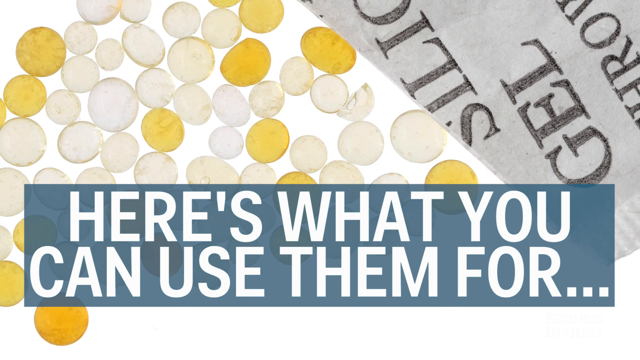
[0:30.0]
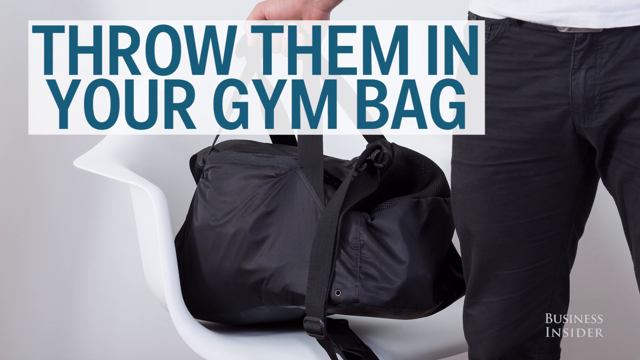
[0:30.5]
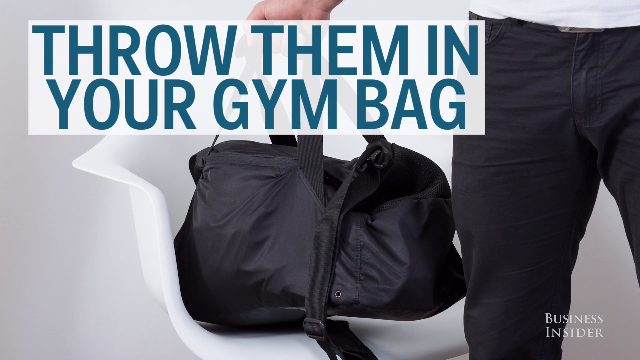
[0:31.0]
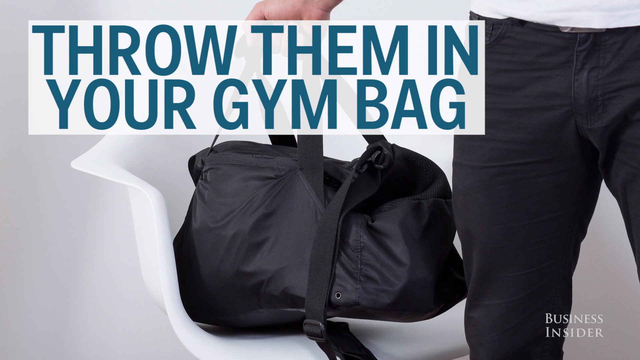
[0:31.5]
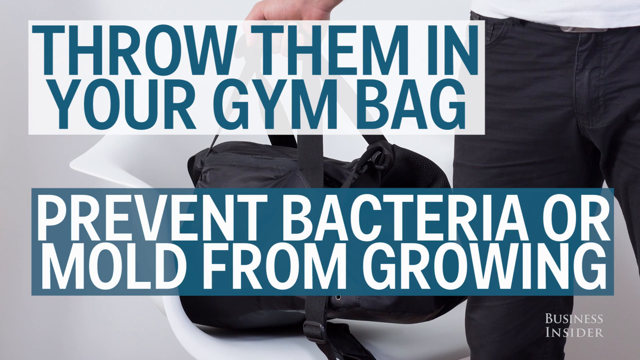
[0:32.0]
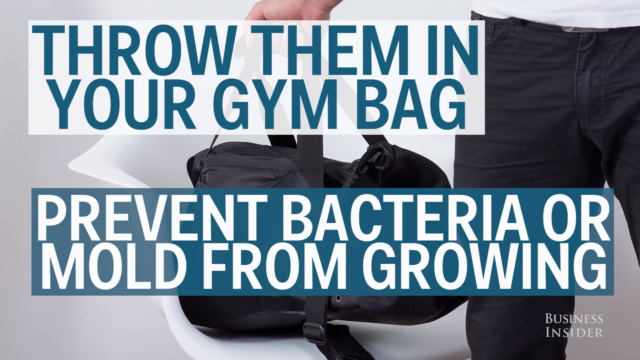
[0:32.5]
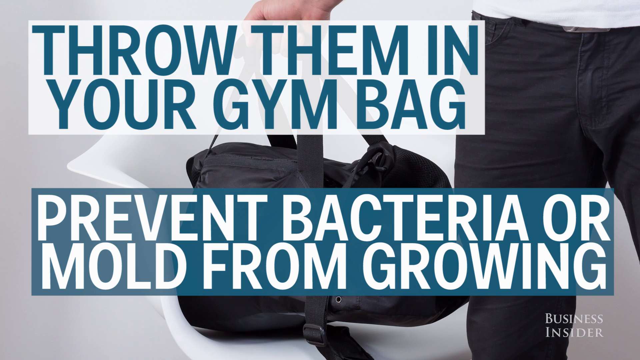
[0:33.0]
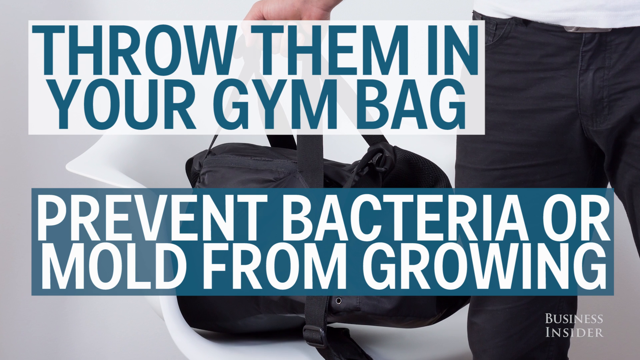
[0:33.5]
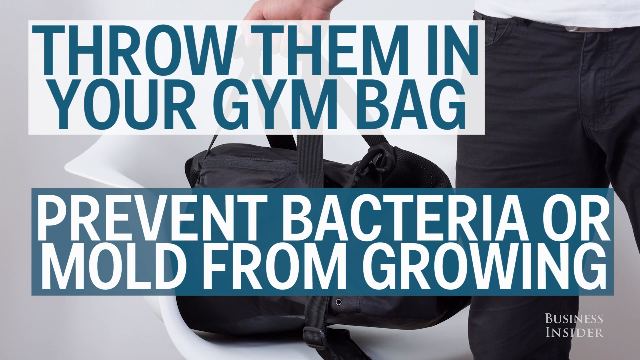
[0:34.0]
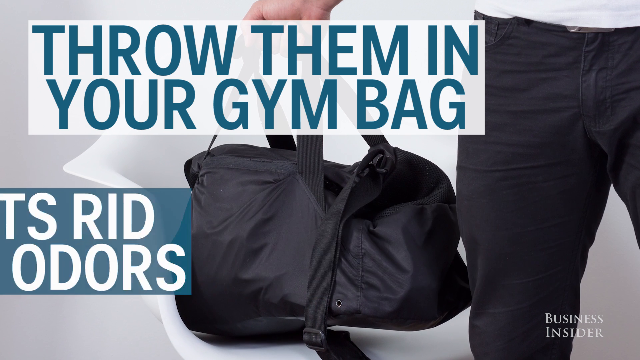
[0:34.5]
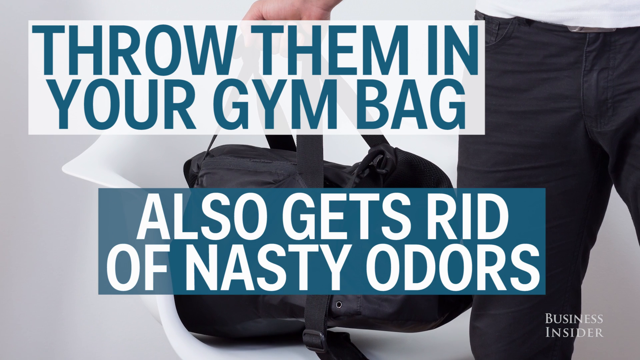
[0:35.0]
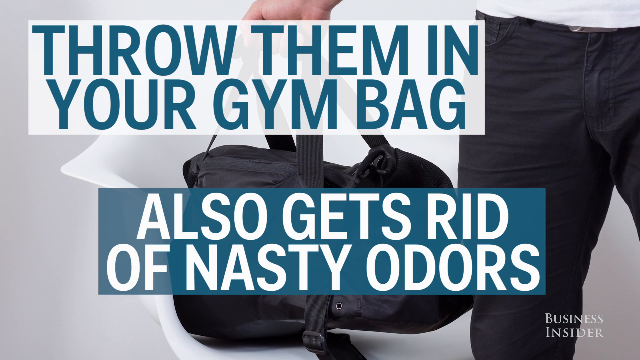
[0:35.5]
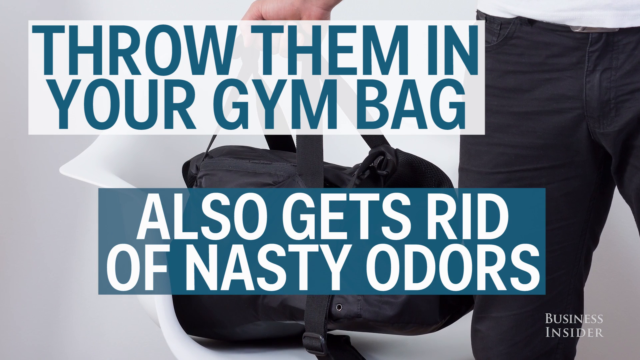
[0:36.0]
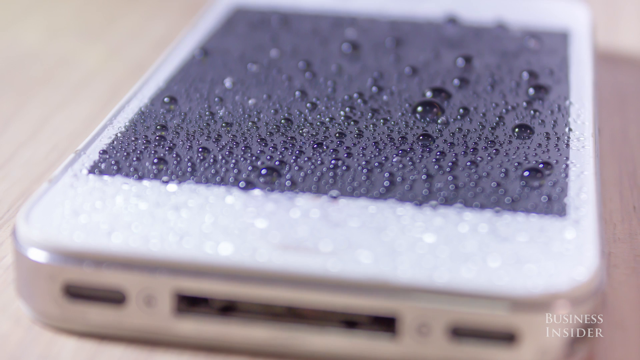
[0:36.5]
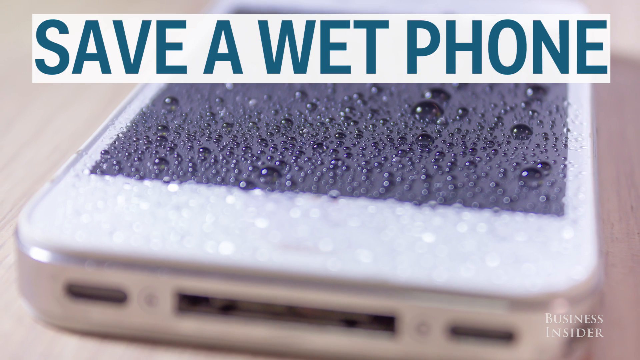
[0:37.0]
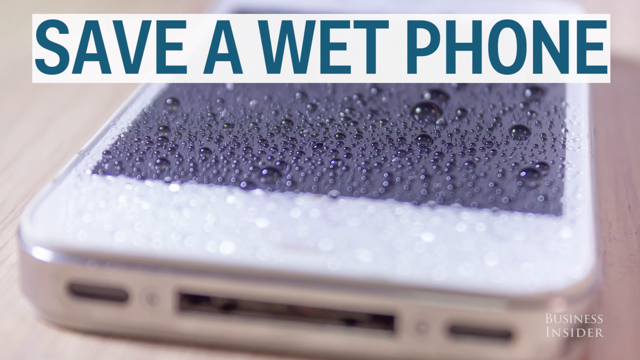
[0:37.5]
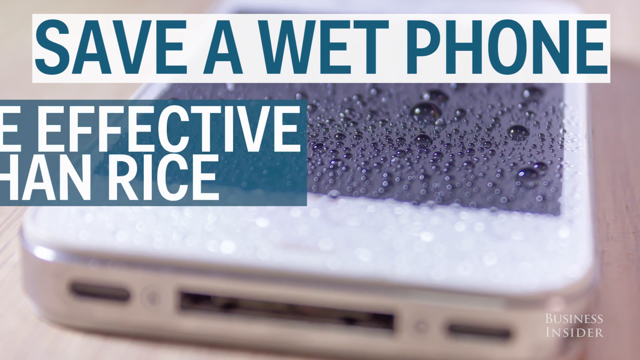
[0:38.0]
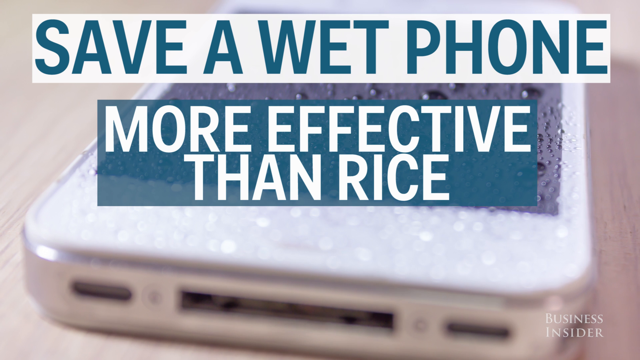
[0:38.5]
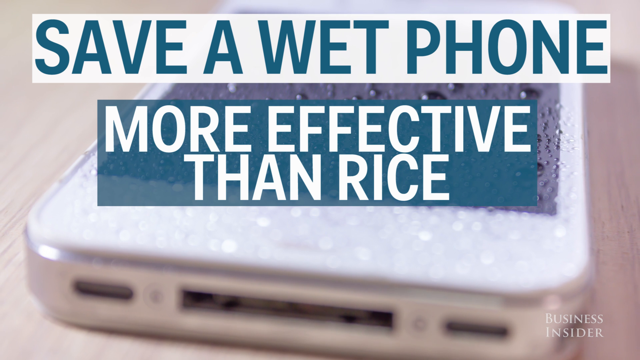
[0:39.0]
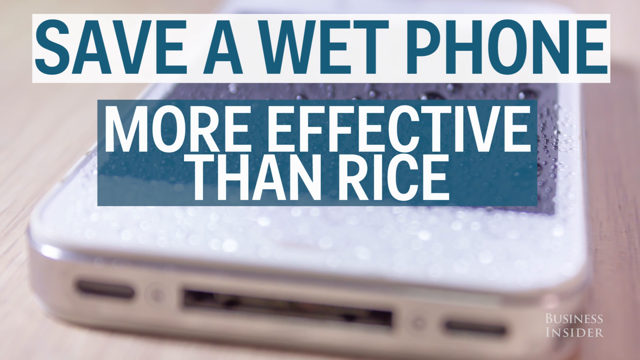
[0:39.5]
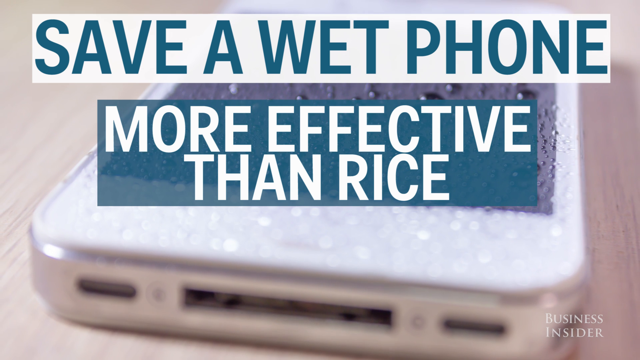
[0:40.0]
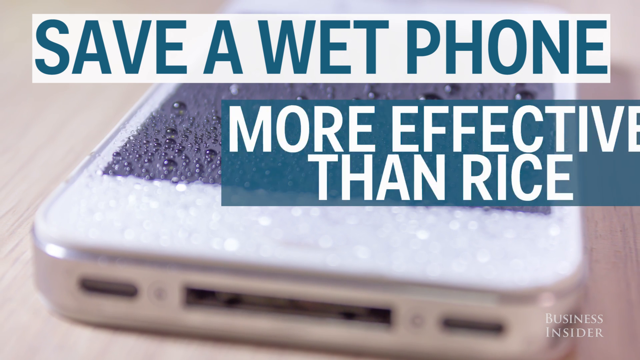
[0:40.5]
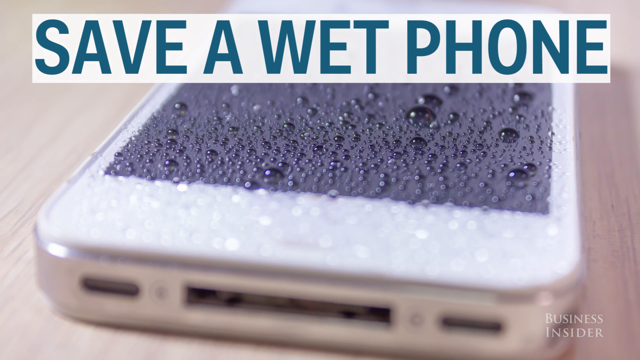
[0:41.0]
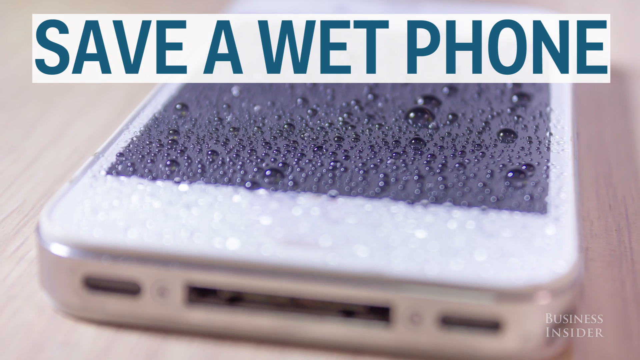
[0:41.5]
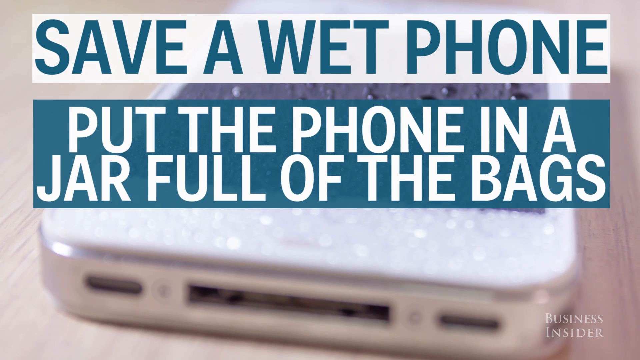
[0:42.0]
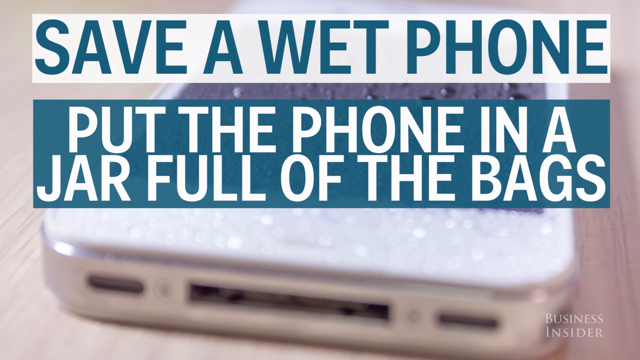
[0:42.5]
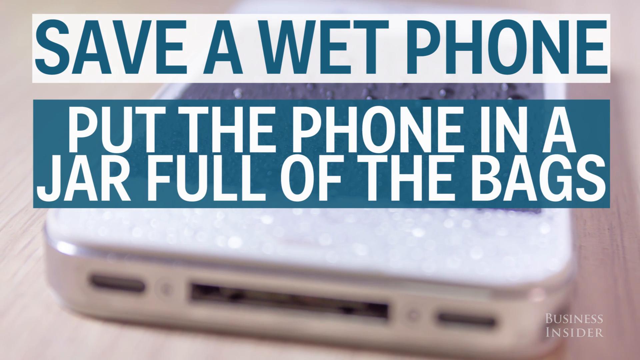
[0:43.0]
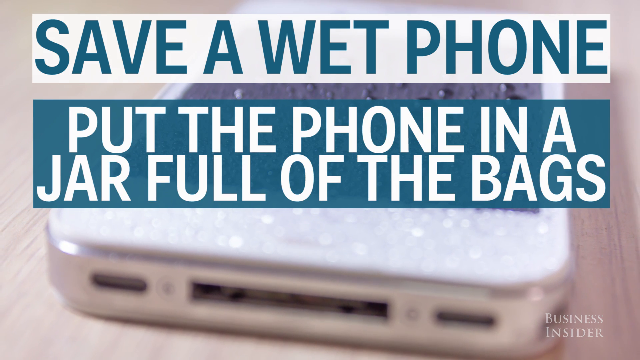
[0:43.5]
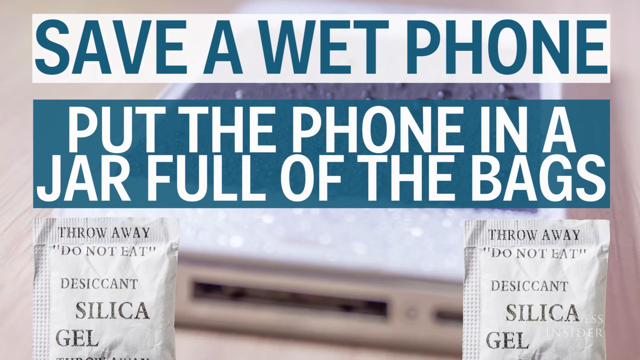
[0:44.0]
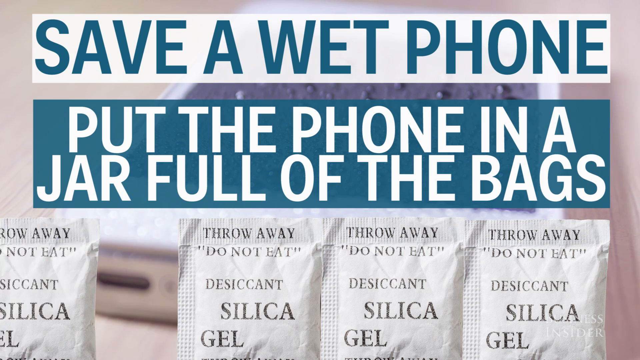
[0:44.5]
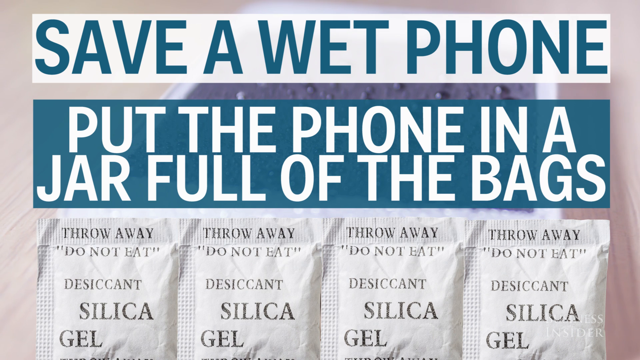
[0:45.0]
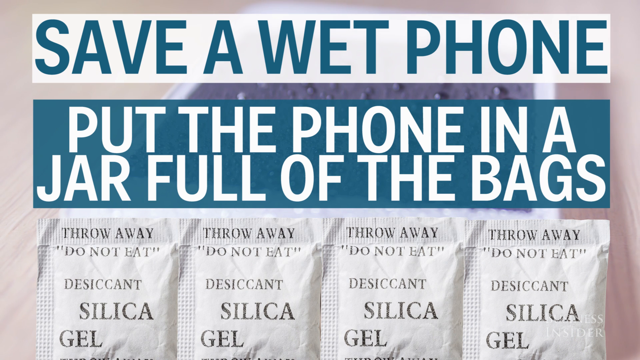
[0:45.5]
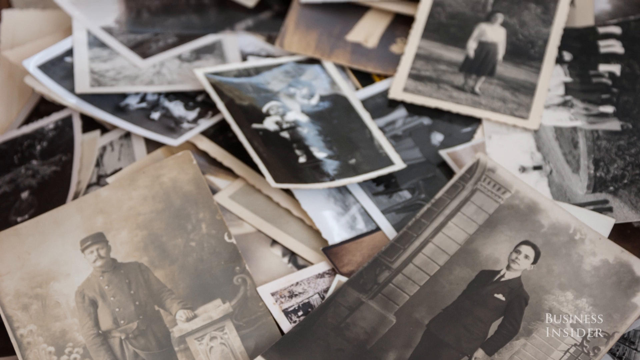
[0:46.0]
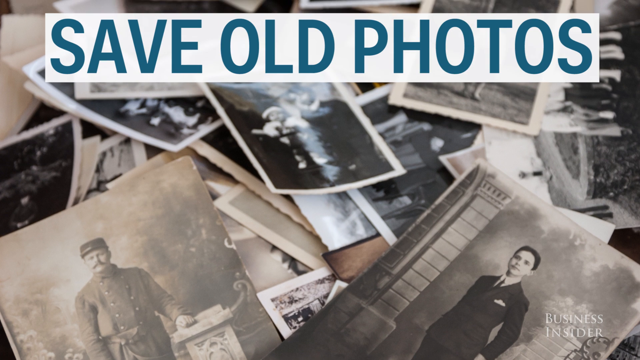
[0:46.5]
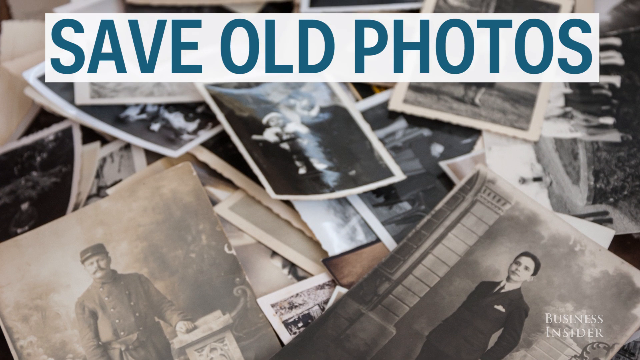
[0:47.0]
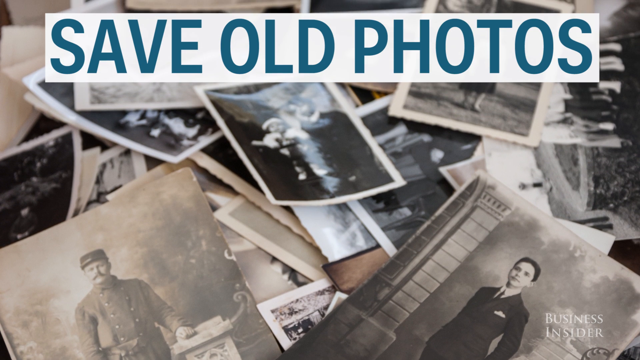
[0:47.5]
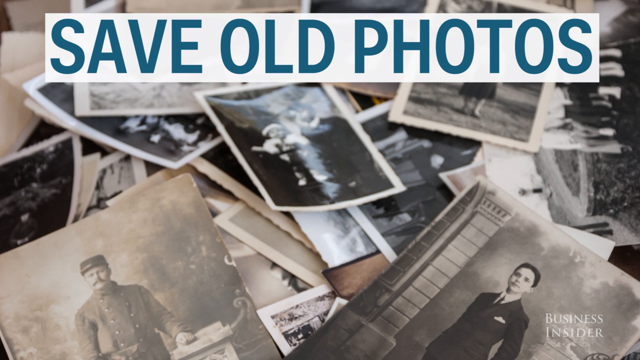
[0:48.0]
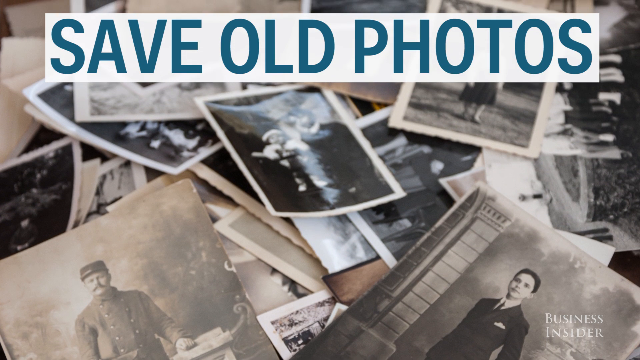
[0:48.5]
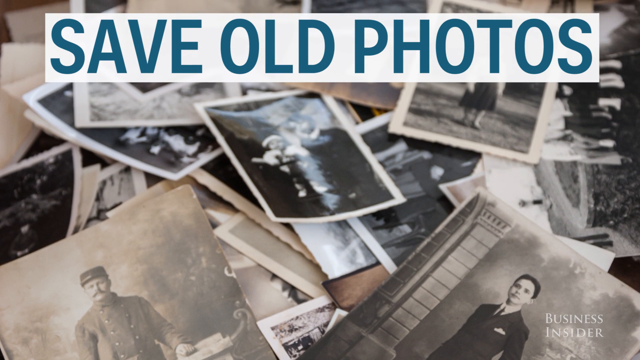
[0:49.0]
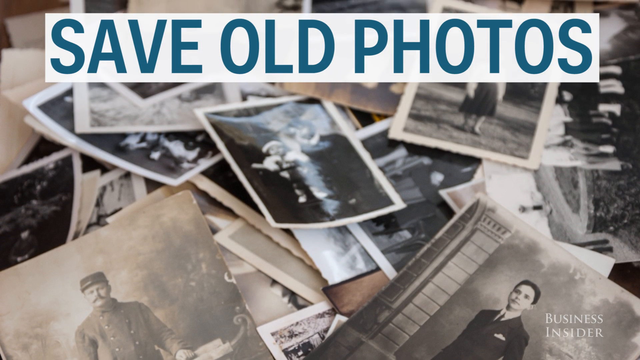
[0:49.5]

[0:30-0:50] The first example is throwing the bags into a gym bag; the reason given is that they prevent bacteria or mold from growing and so get rid of nasty odors. The next example is saving a wet phone, with the video indicating that silica gels are more effective than rice at drying out a wet phone: the phone is put in a jar full of the silica bags, without opening the bags. The following example introduced is saving old photos.